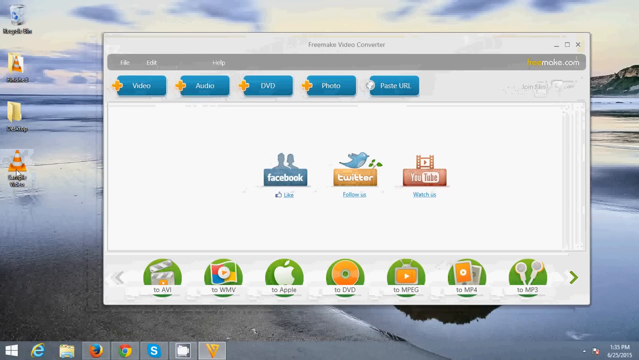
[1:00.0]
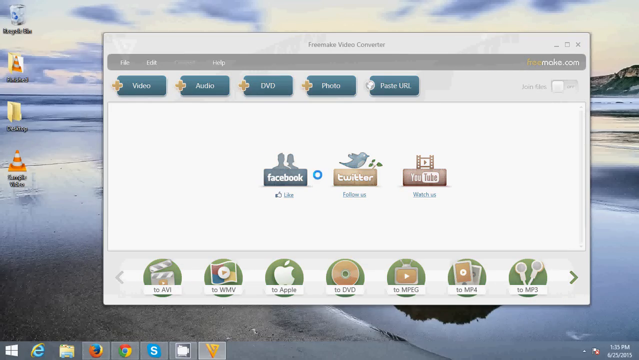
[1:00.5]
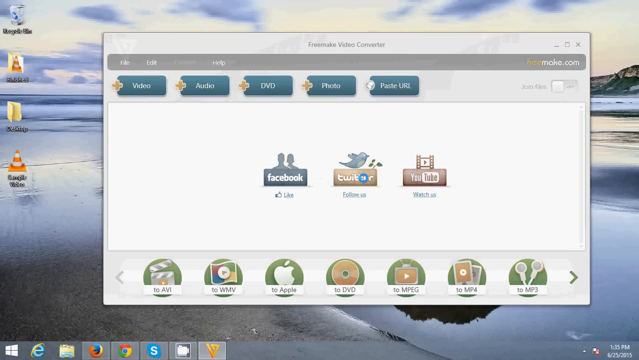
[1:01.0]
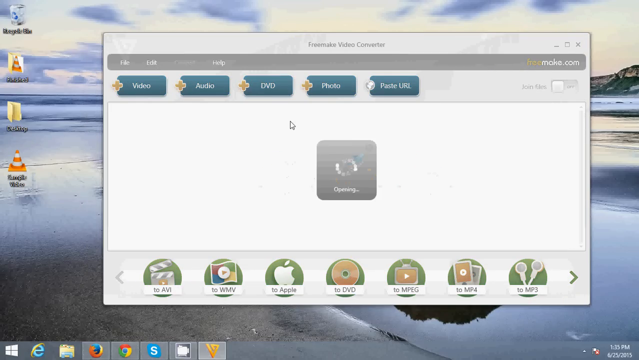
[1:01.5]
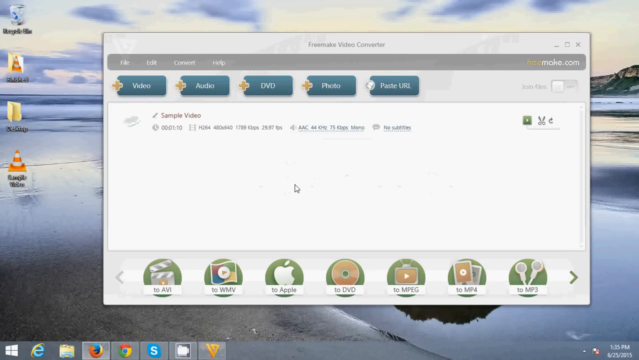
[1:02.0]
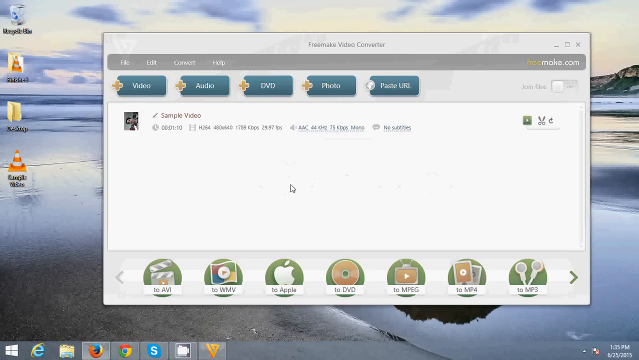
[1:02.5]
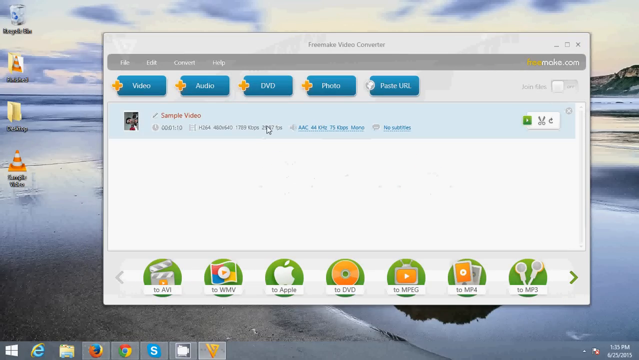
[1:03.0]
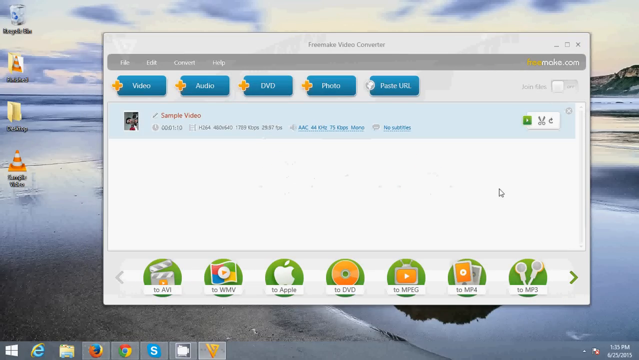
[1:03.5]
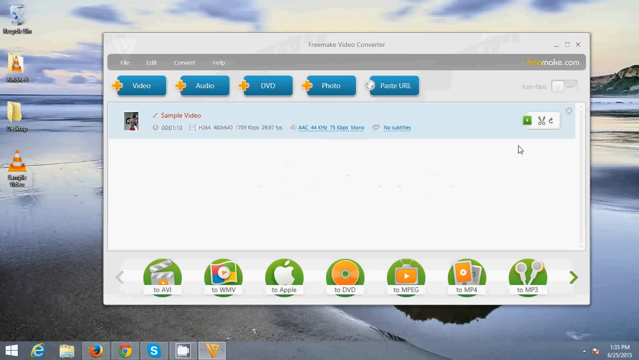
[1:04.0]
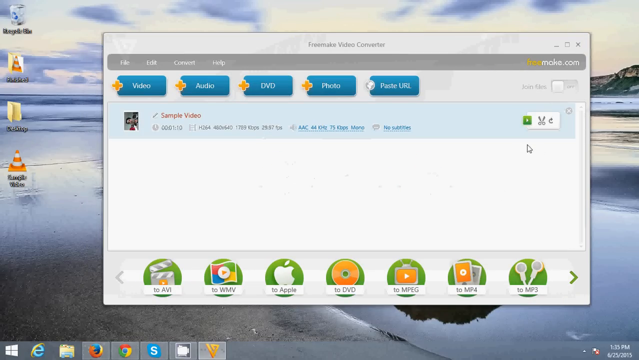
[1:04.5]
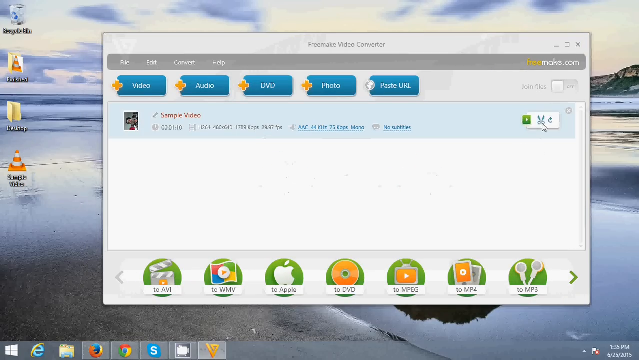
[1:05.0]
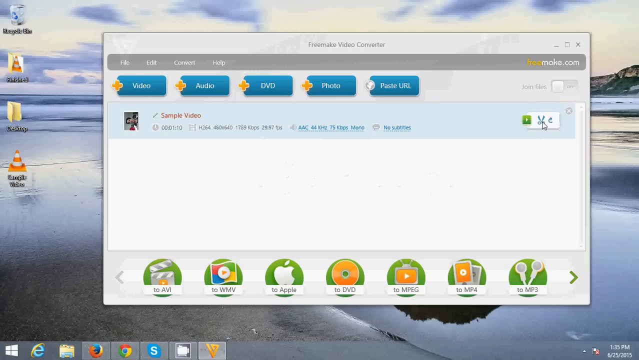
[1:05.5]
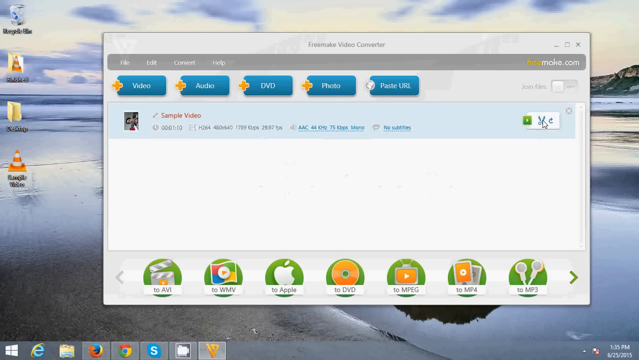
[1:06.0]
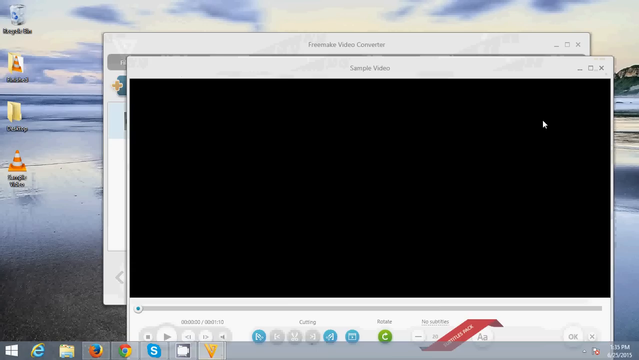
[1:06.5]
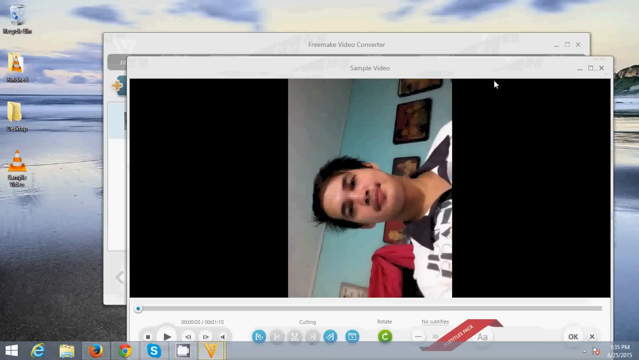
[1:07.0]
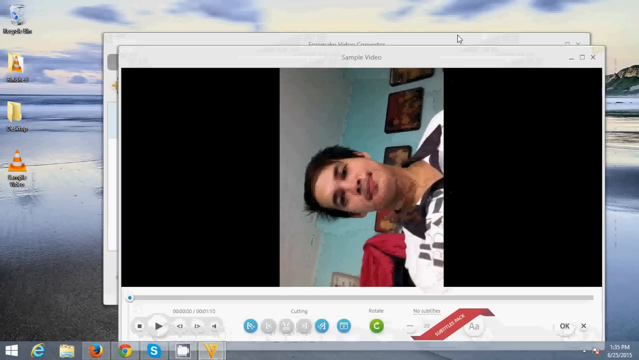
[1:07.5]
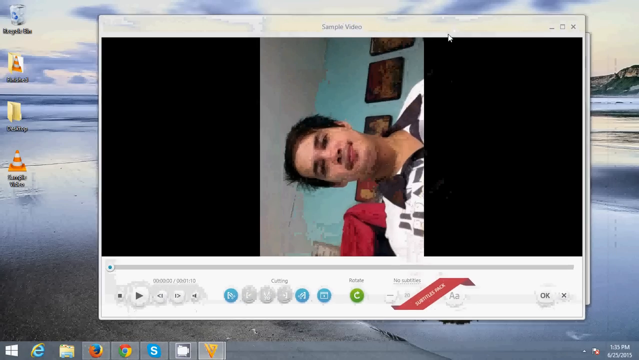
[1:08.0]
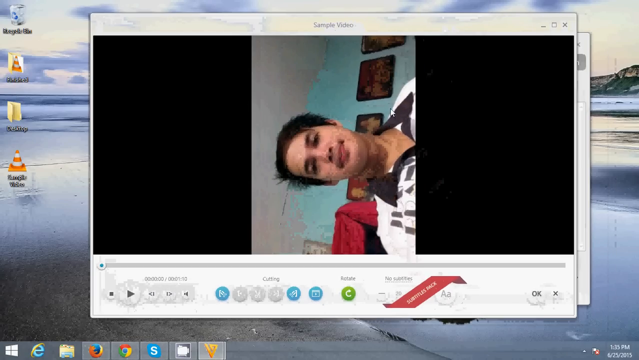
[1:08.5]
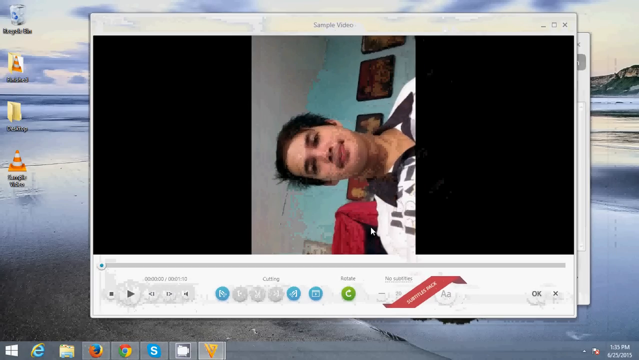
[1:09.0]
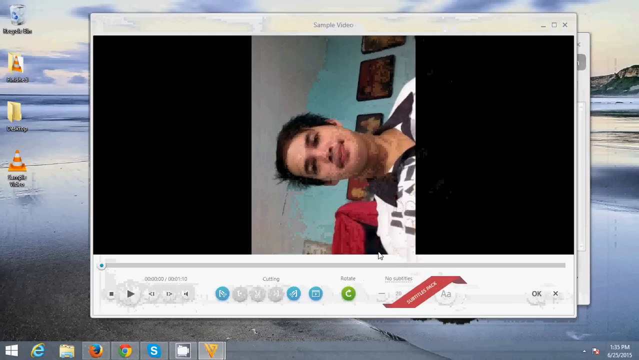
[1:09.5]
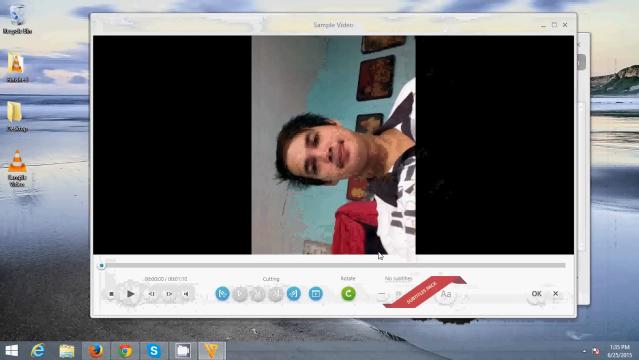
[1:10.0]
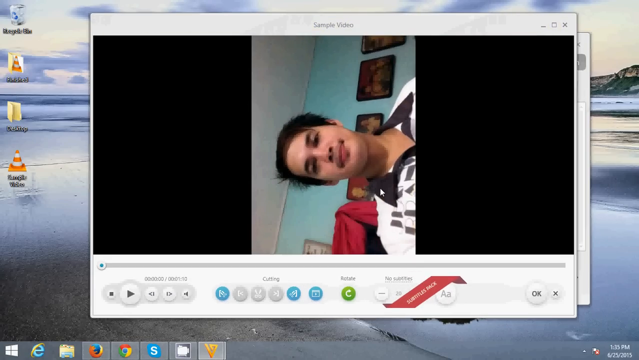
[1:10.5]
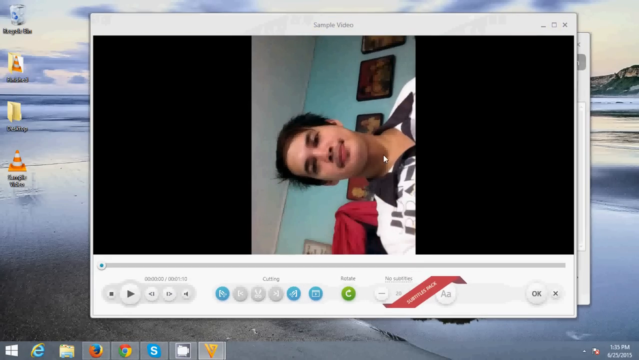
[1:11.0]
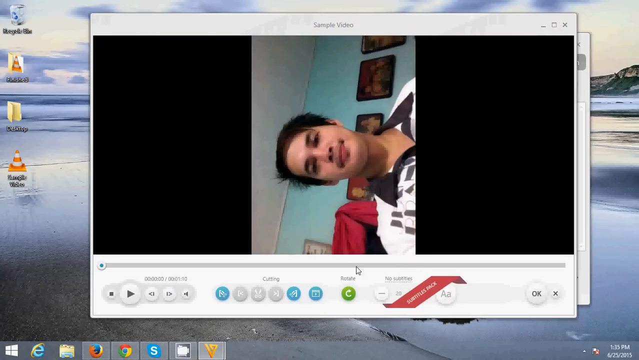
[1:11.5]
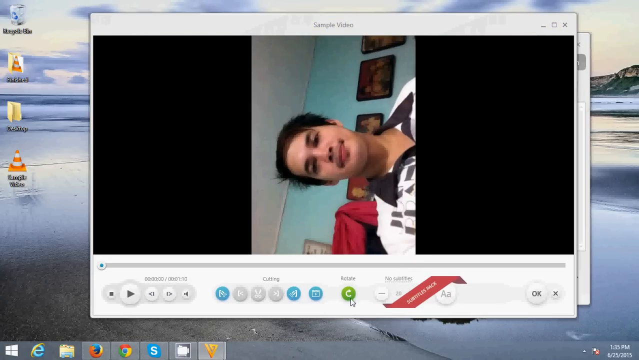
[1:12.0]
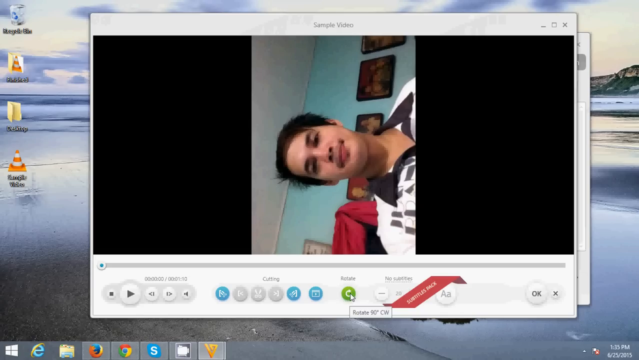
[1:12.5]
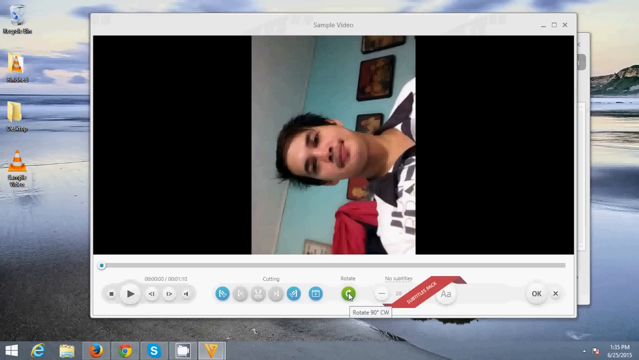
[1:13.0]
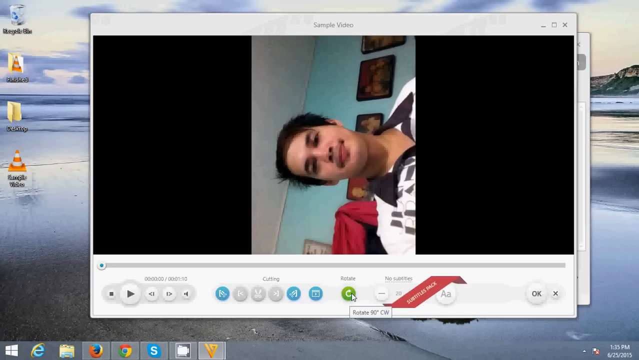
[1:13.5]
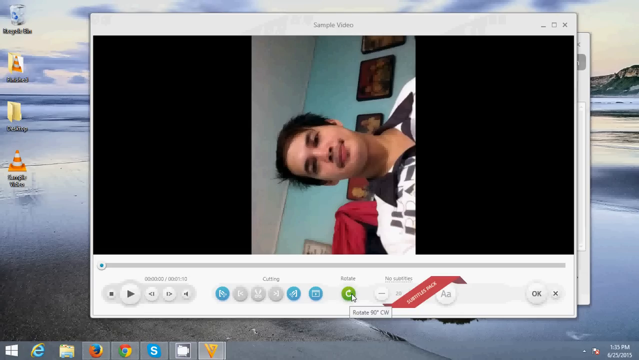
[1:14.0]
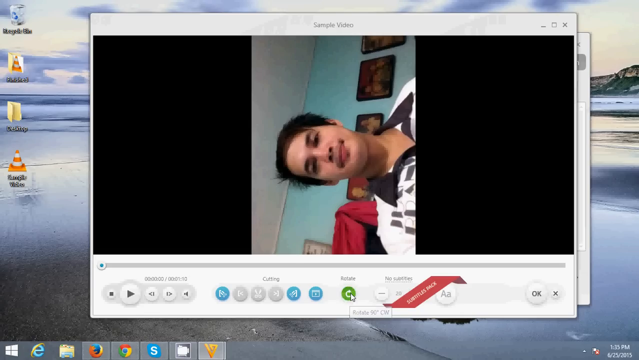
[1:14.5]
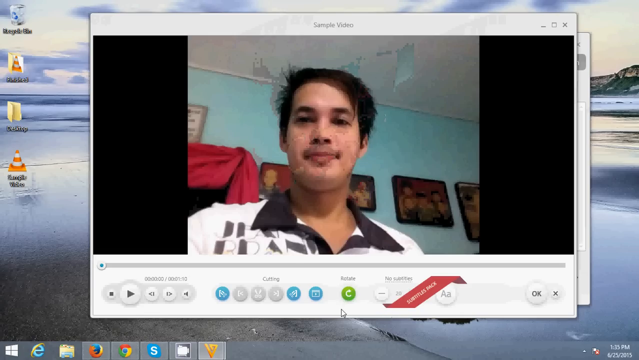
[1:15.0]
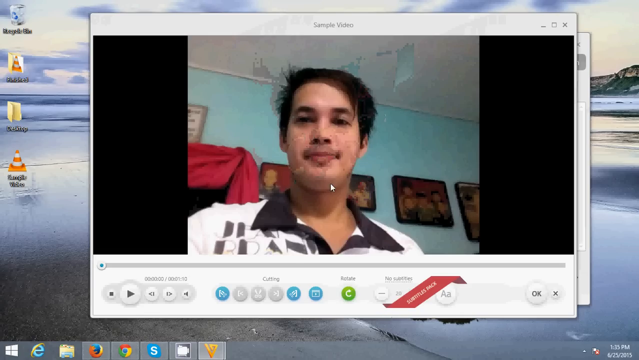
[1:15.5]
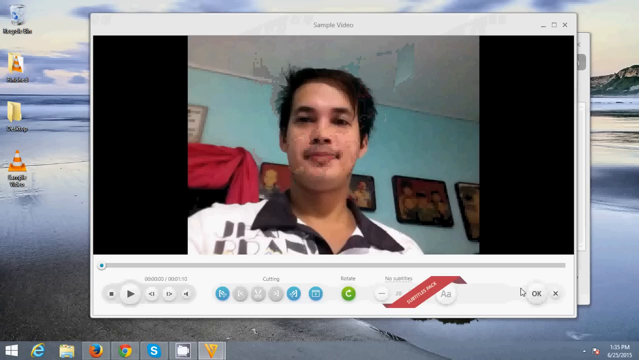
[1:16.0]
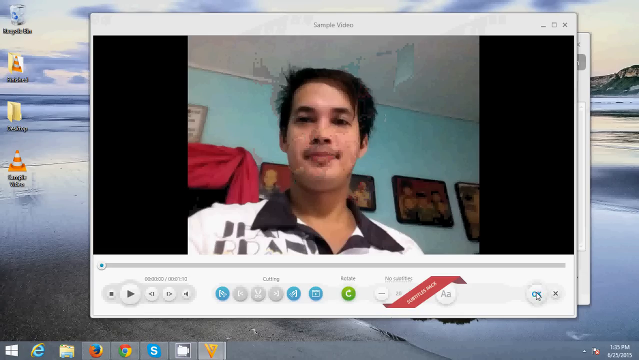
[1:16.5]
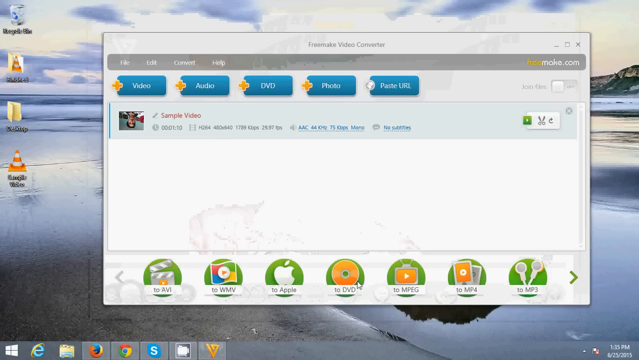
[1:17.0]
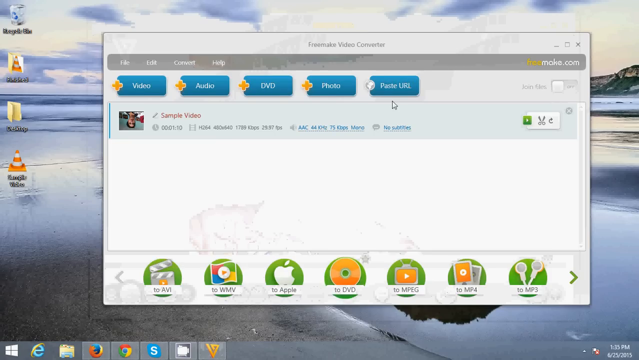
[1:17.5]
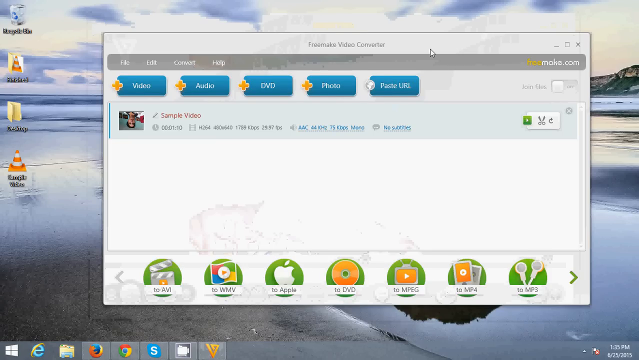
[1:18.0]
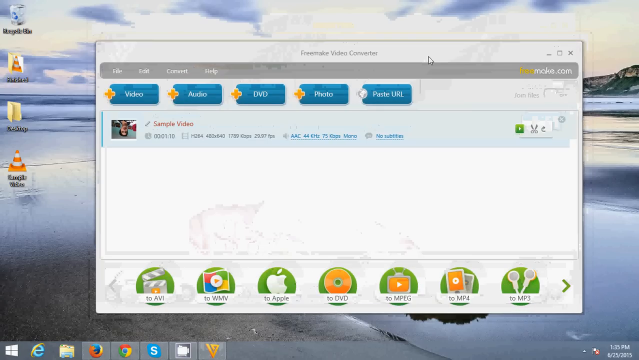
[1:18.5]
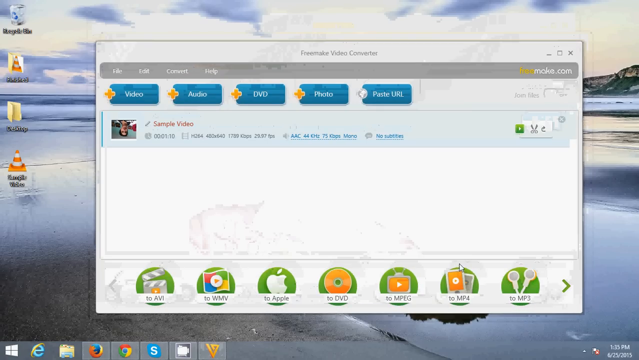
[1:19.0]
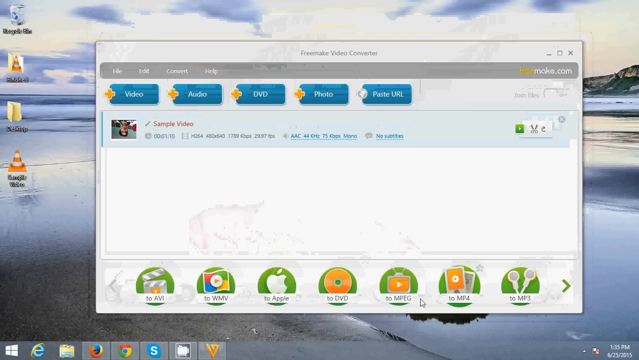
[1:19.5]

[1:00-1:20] The triangle traffic cone file is opened, and a loading icon appears in the Free Make Video Converter program. The sample video is now uploaded into the program, titled "sample video", with details of the video such as its quality and length and a tiny thumbnail image of it. The cursor highlights the file, then goes to the right-hand side of the screen and clicks a pair of scissors icon, which opens another screen showing the video in its vertical format as before. The cursor moves the box further up the screen, then moves down to the bottom of the window, where there is a green circle with an arrow going round and the word "rotate" above it. This is clicked and the video rotates to the right, so it is now in a horizontal format. An OK button on the right-hand side of the screen is then clicked, saving the new format for the video.